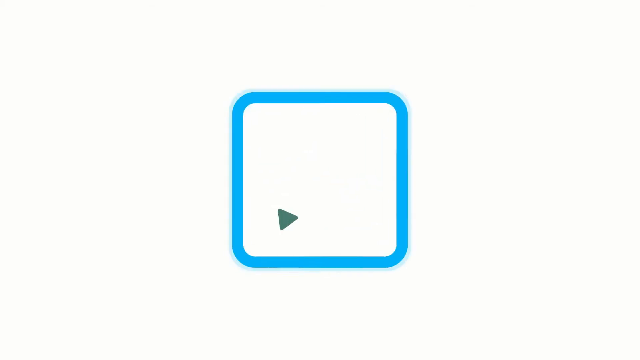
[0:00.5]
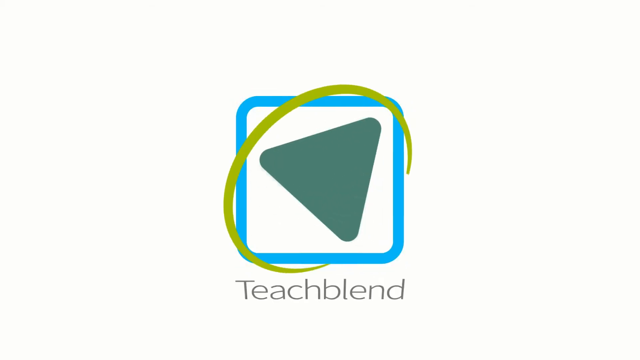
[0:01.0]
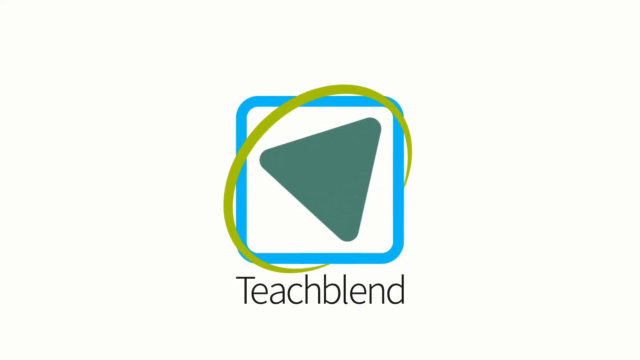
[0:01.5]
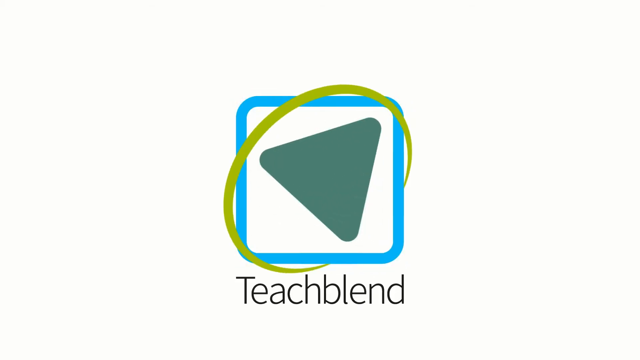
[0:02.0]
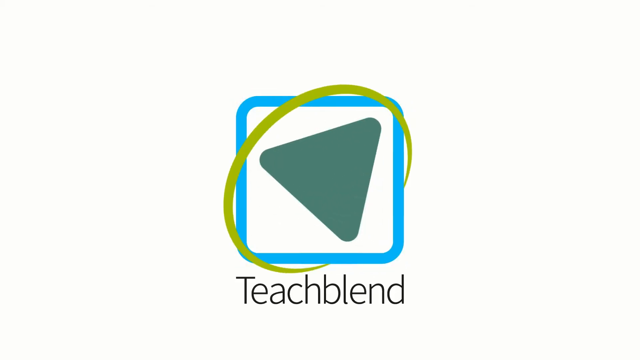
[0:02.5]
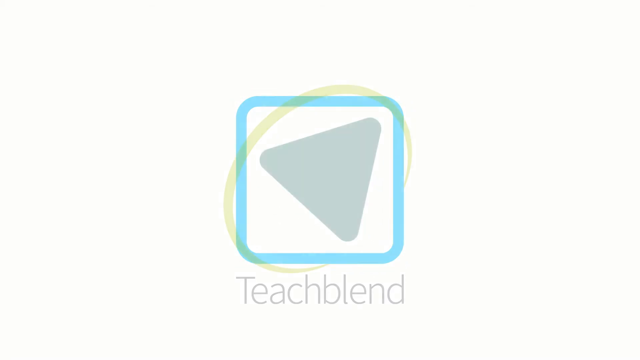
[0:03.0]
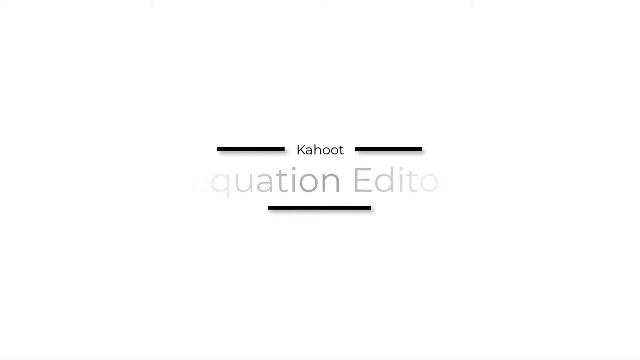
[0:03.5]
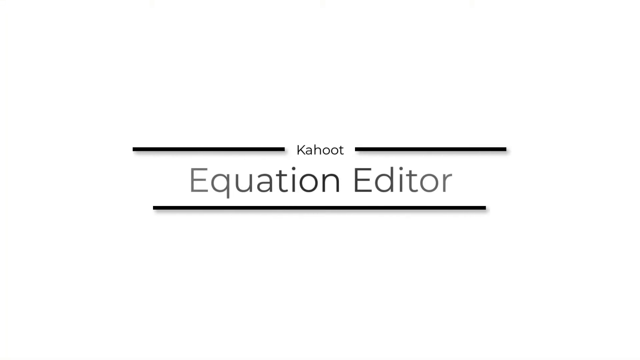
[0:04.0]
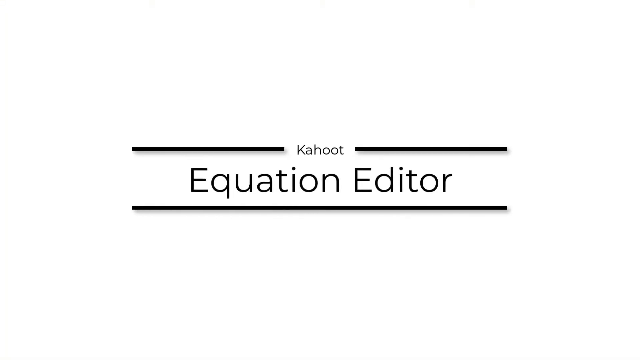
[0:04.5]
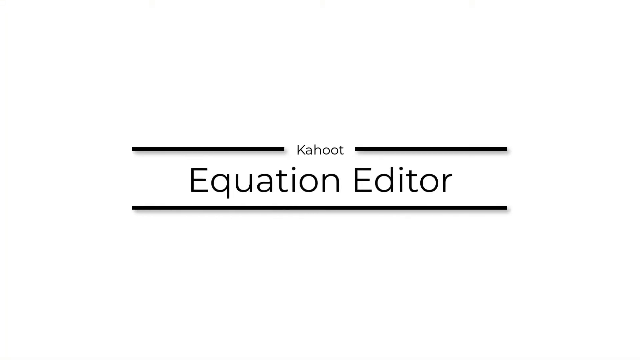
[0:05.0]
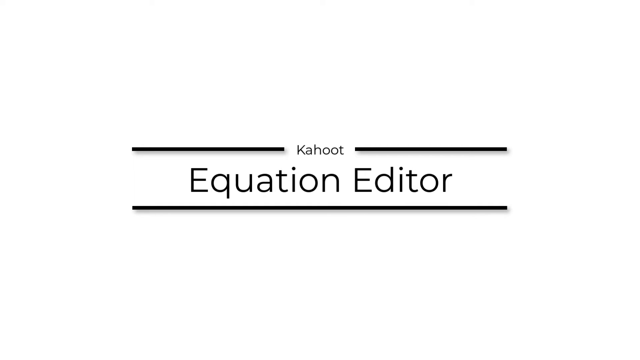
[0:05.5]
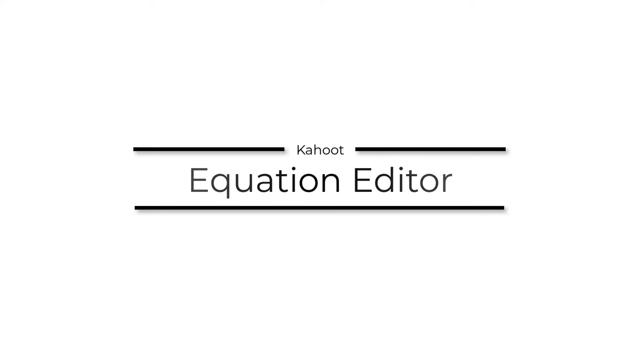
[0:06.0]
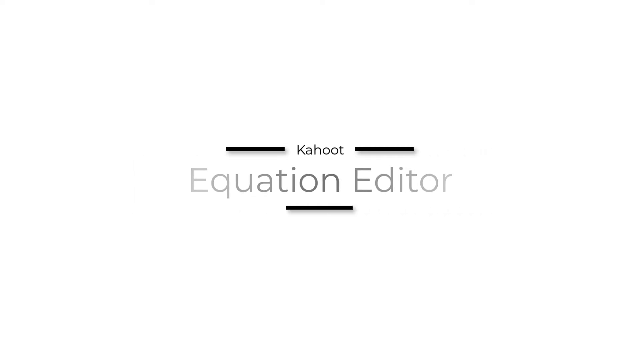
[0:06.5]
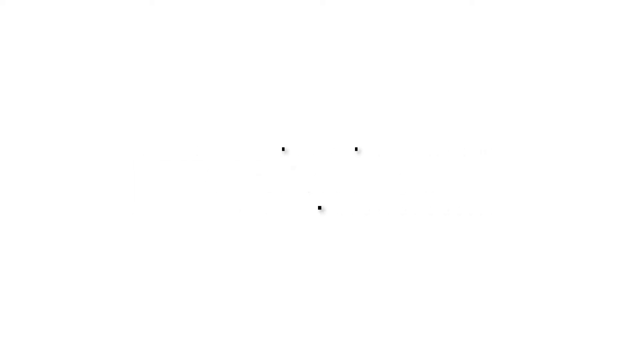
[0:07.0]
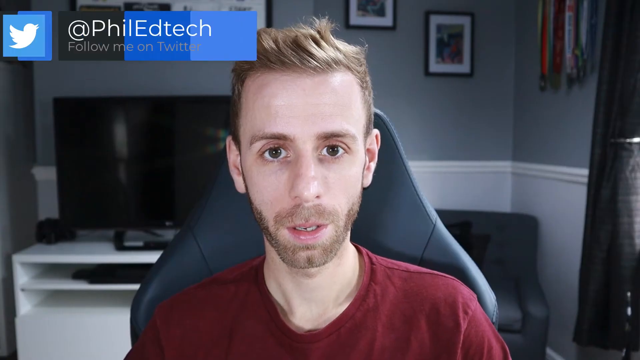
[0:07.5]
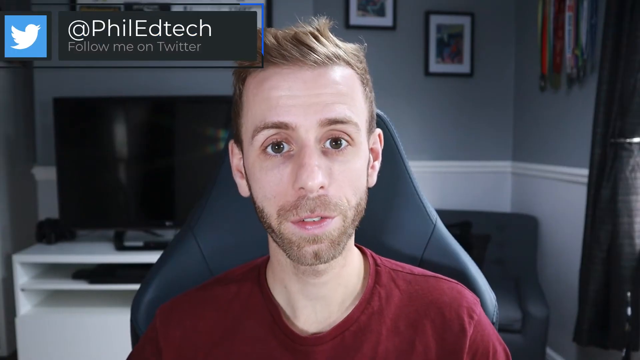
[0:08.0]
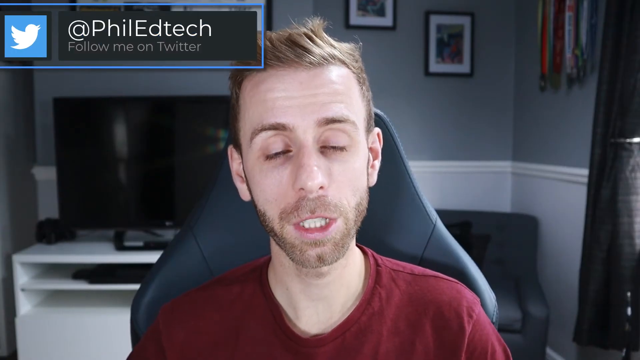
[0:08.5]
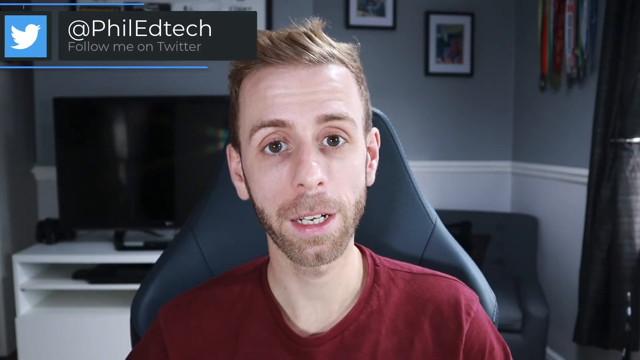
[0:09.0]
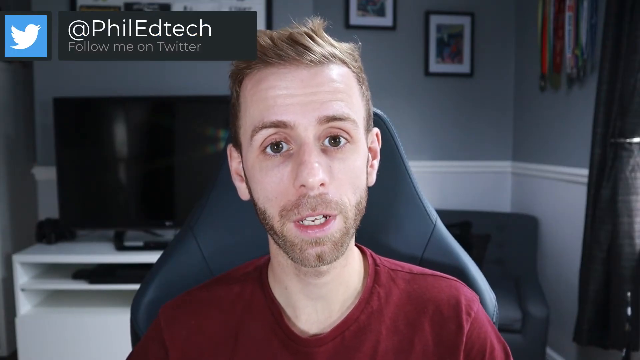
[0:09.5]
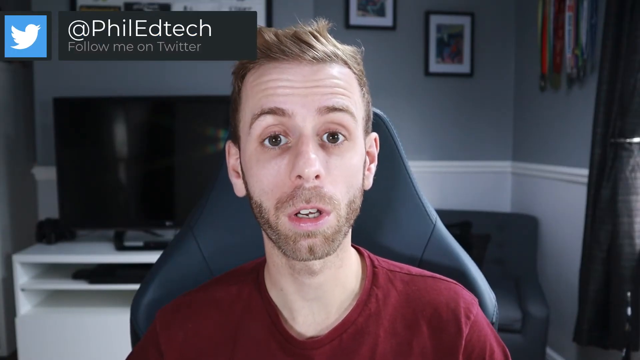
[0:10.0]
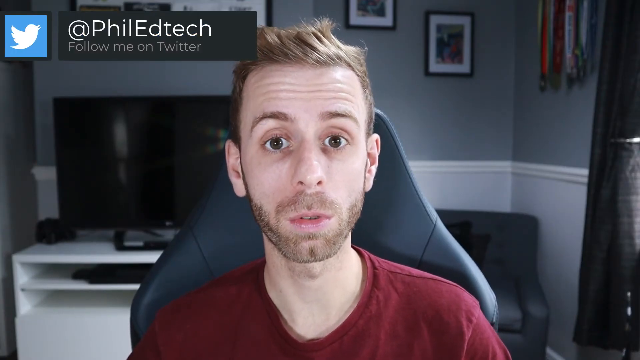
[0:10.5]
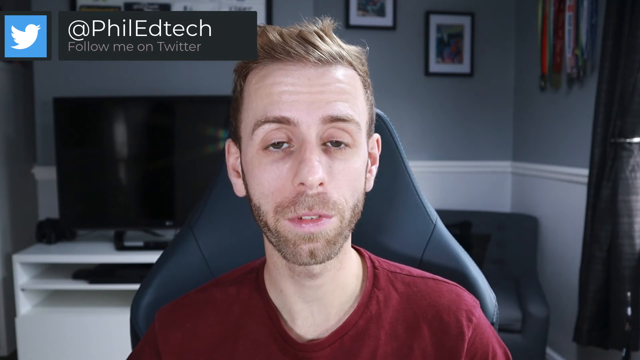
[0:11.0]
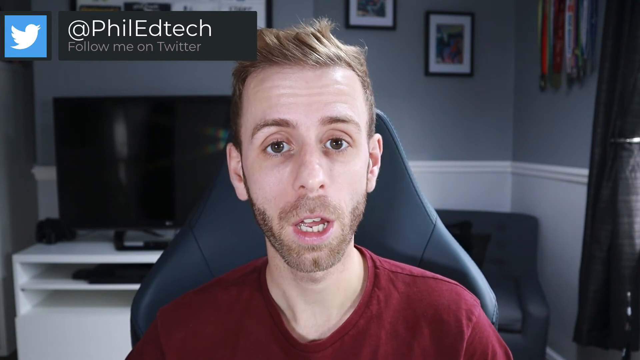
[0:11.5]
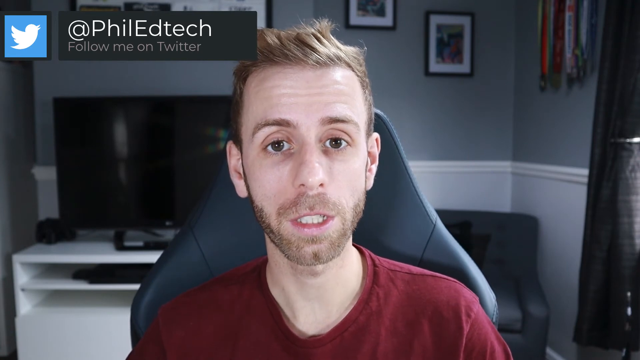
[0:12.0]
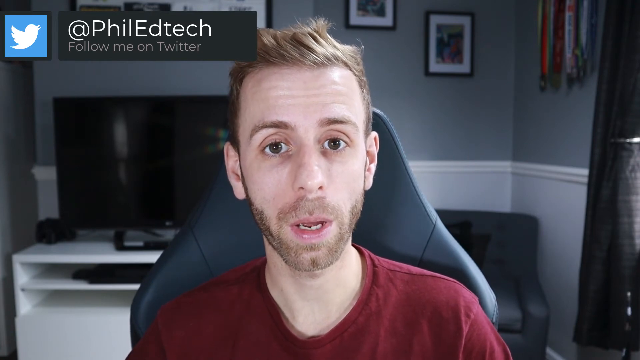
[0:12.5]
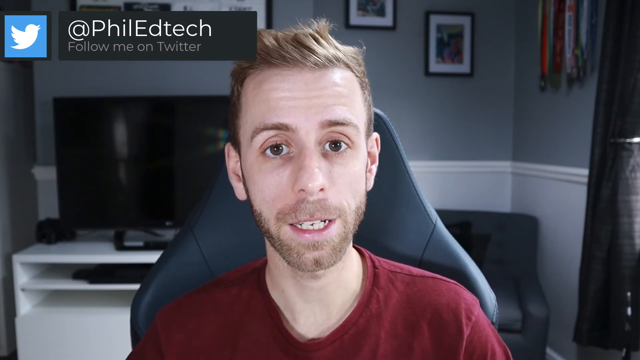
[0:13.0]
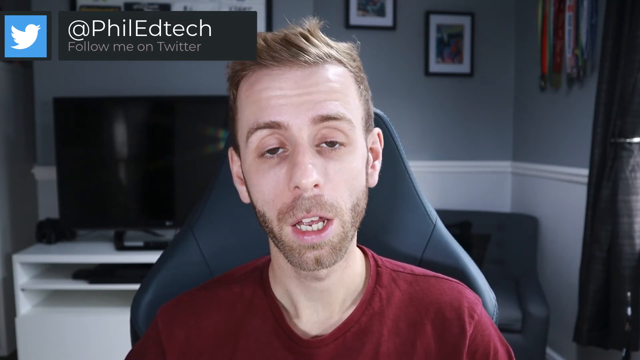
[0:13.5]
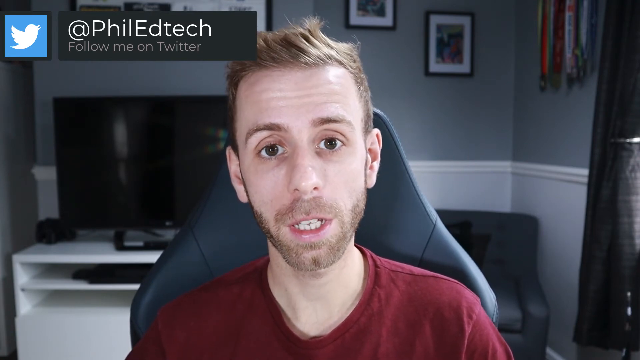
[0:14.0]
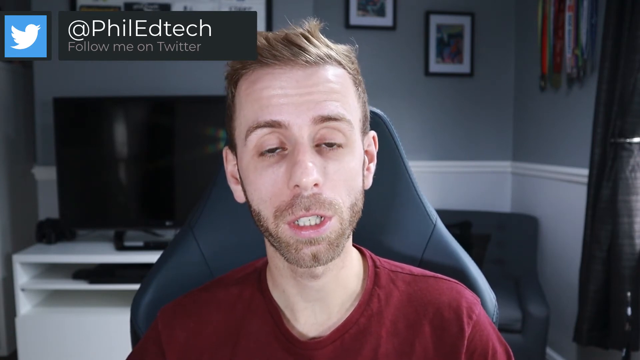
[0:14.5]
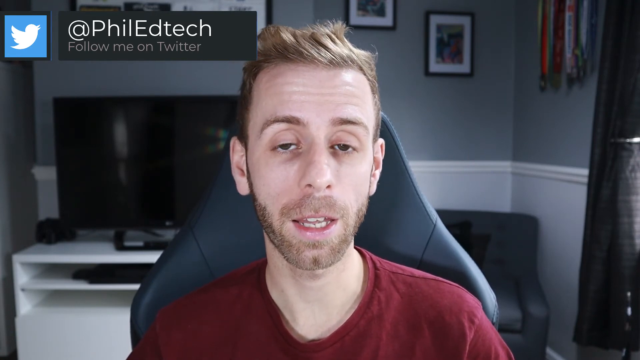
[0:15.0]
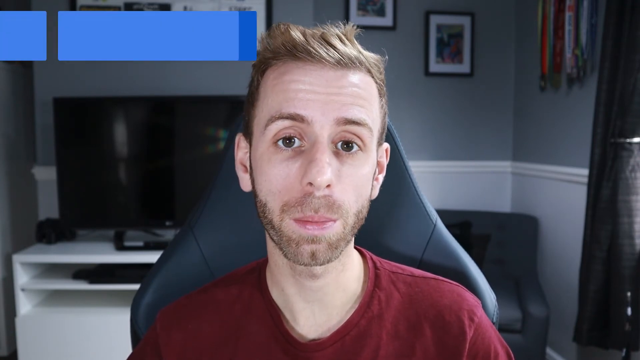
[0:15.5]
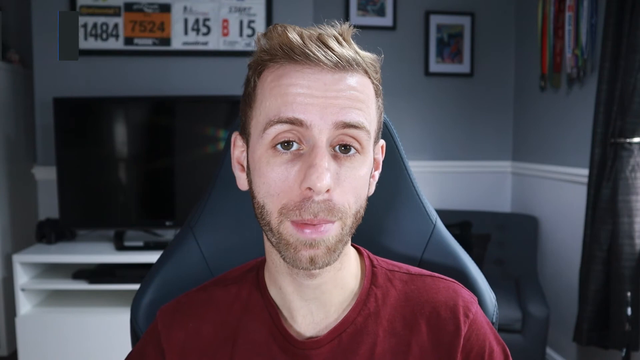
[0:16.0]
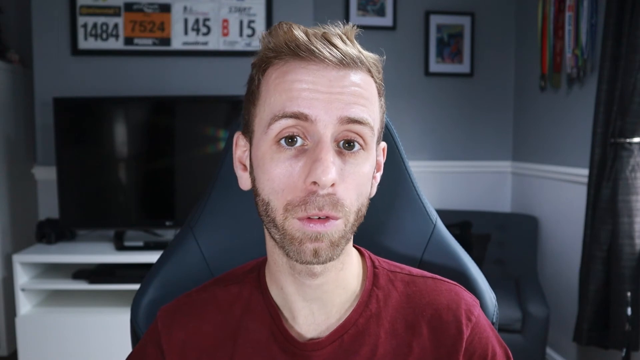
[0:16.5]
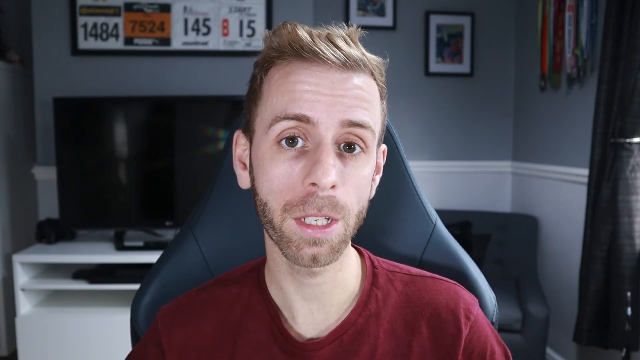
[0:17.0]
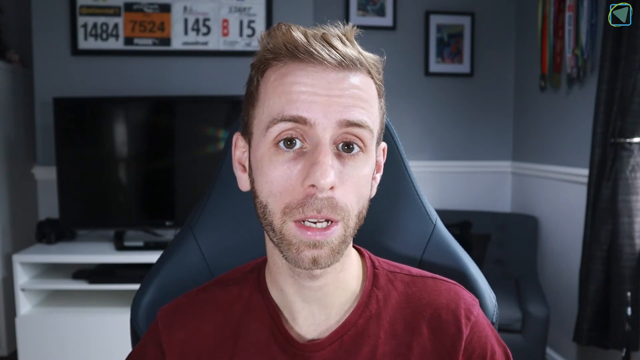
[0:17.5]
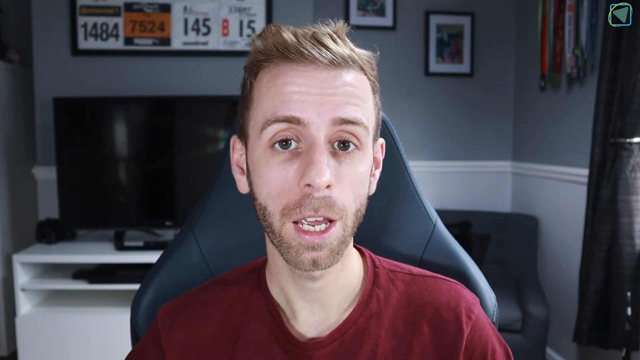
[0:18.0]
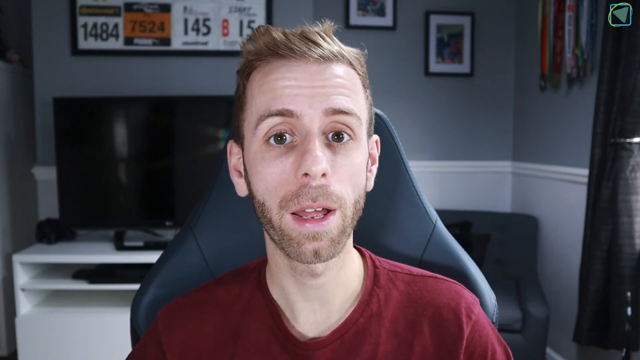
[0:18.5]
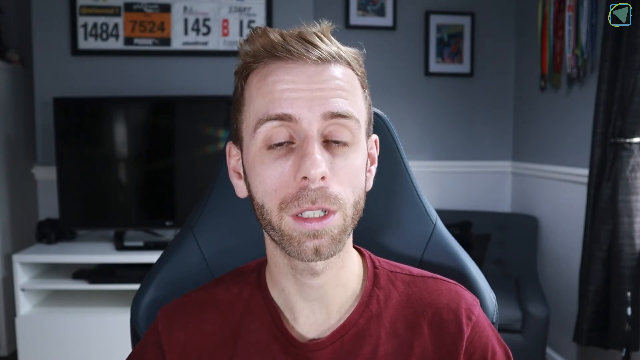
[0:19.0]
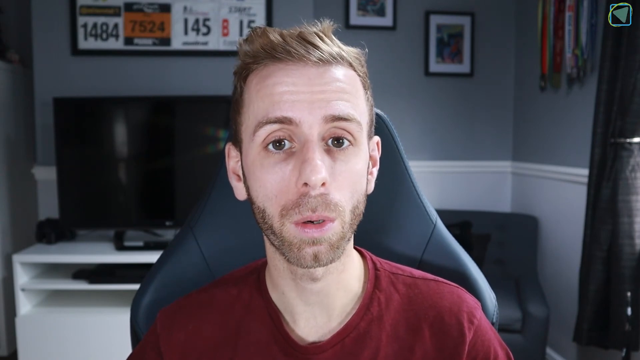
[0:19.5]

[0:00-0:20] The video opens with an animated logo for a company or organization named TeachBlend: a blue square with a kind of greenish-yellow circle around it, sort of passing over it, and a dark green triangle on the inside with its point facing downward. The logo bursts onto the screen in an animated way. Next, a title on a white background emerges in an animated way, reading "Equation Editor" in black text. Above and below it are two lines, and between those two lines is the word "Kahoot". After a second, a man appears with the Twitter handle "@PhilEdTech": a Twitter logo in the top left of the screen shows his handle and the words "follow me on Twitter". He is seen from about the shoulders up, sitting in a chair and talking toward a camera or computer screen. He is in a room, probably his bedroom in a house. He wears a maroon shirt, is pretty thin, and has blonde hair, brown eyes, a five o'clock shadow and kind of big ears. In the background there is a television on a white TV stand. Medals, apparently from running marathons, hang on the wall in the back, and behind him is a framed image with a lot of number cards, suggesting he is possibly a marathon runner.